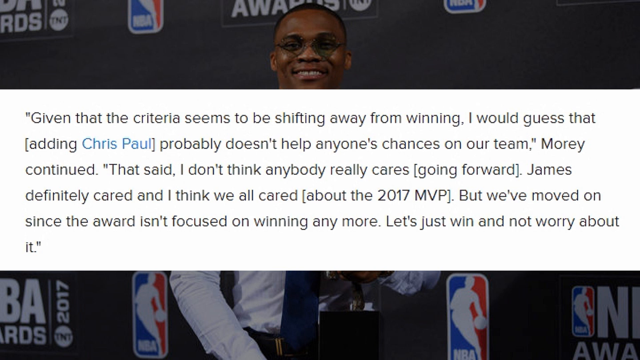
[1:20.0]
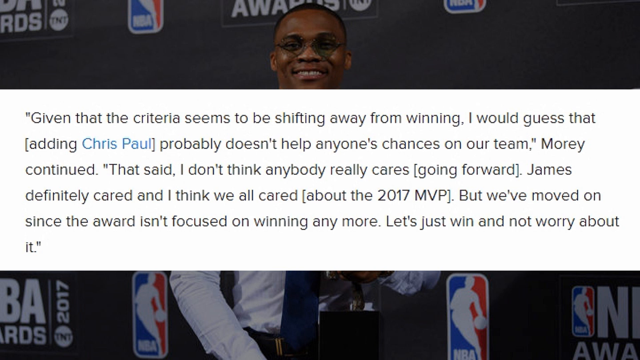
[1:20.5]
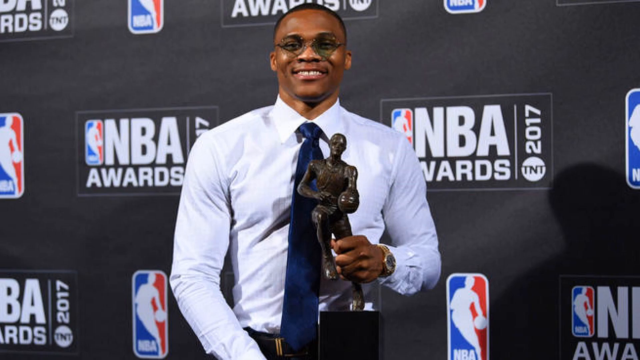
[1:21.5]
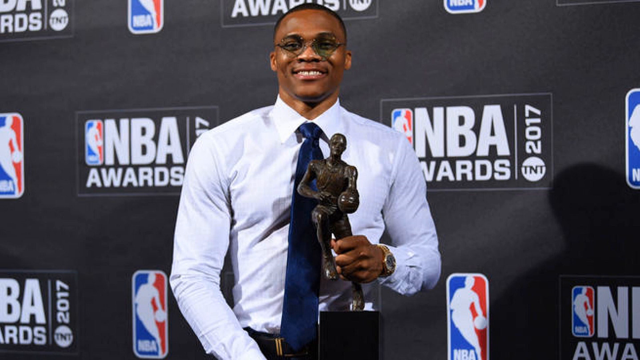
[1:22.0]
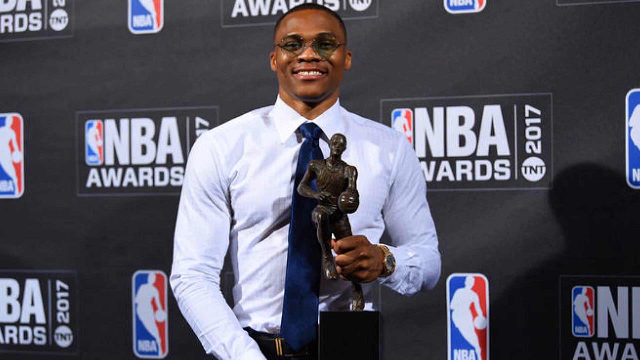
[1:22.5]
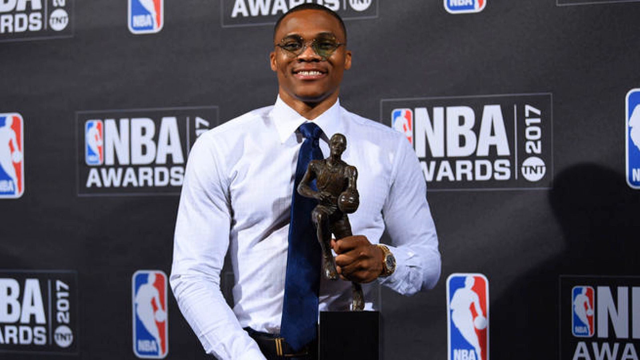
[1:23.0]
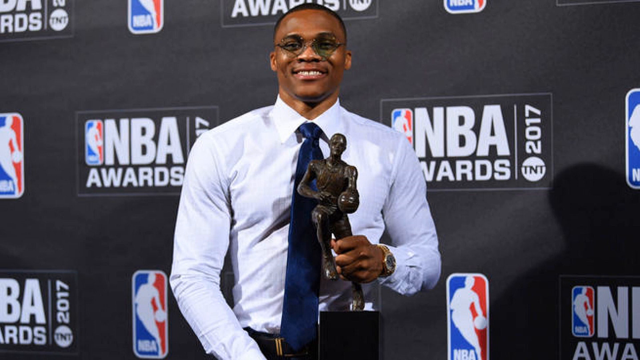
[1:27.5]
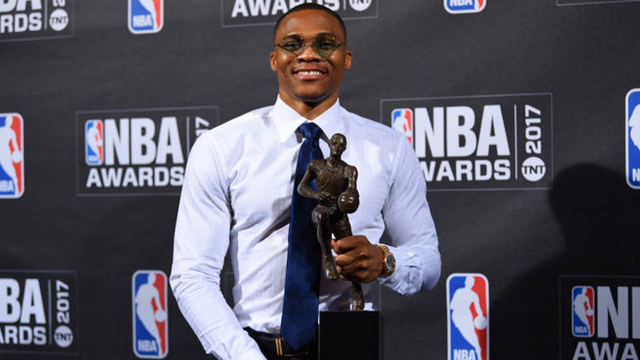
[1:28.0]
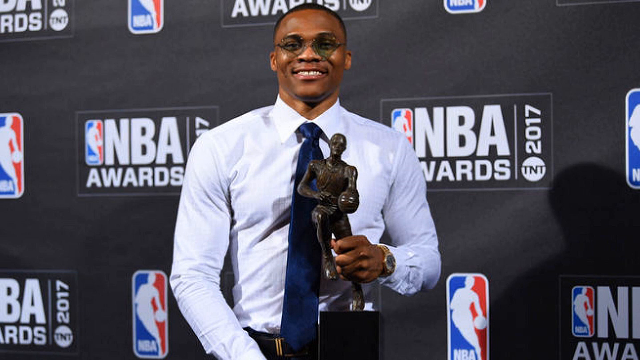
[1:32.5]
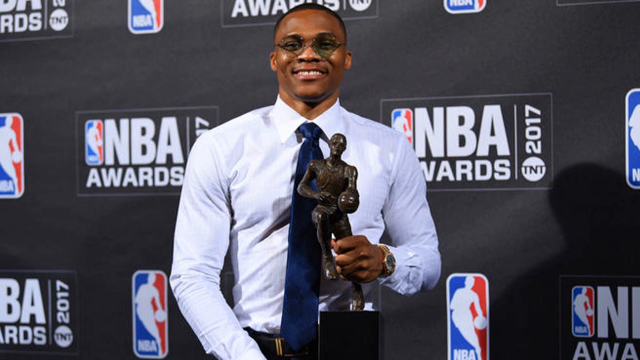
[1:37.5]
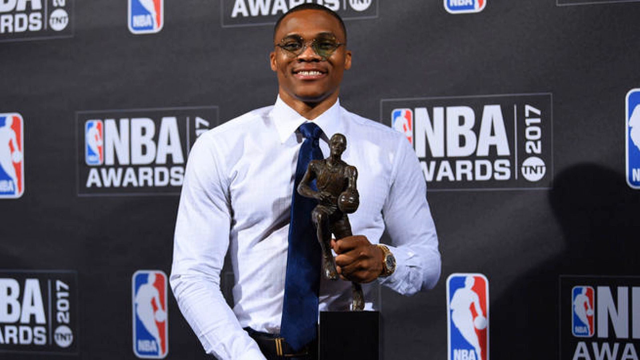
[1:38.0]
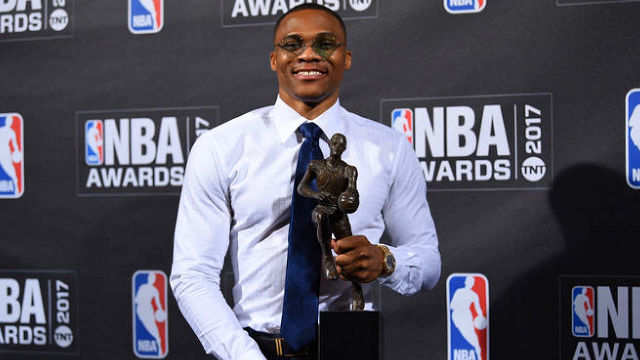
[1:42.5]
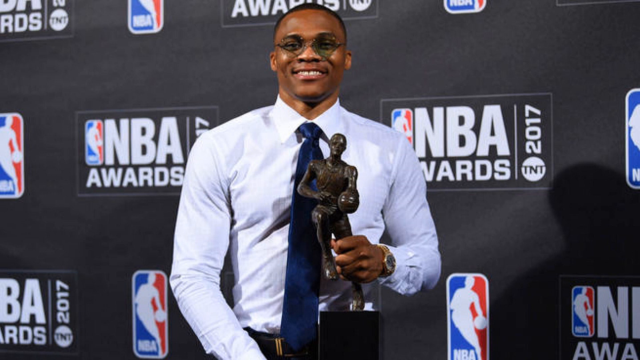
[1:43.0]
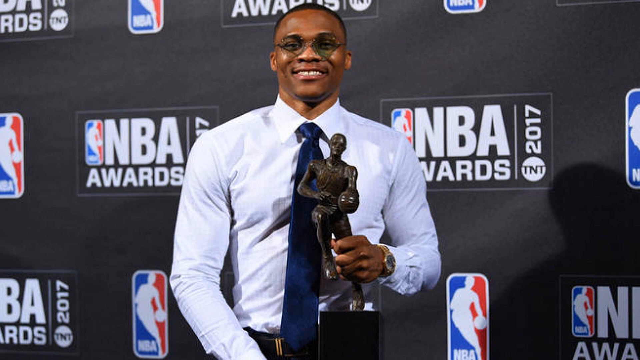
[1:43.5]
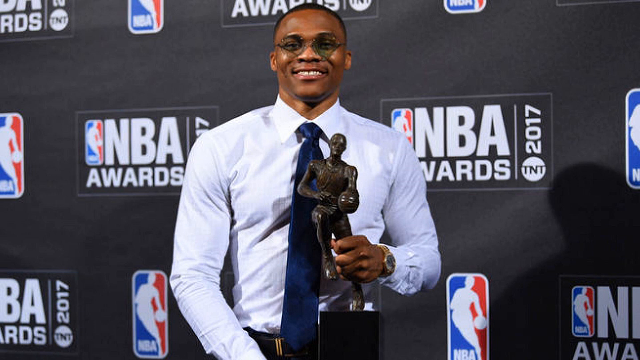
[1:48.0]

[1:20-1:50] Russell Westbrook looks very happy as he holds up a trophy and smiles directly at the camera, wearing a different pair of glasses. The background reads "NBA Awards 2017" with a TNT logo right below it, and is otherwise completely black except for the NBA Awards logo. Westbrook wears a light blue polo shirt and a dark blue tie. Text then reads "given that the criteria seems to be shifting away from winning," followed by further text including "James definitely cared and I think we all cared. But we've moved on since the award."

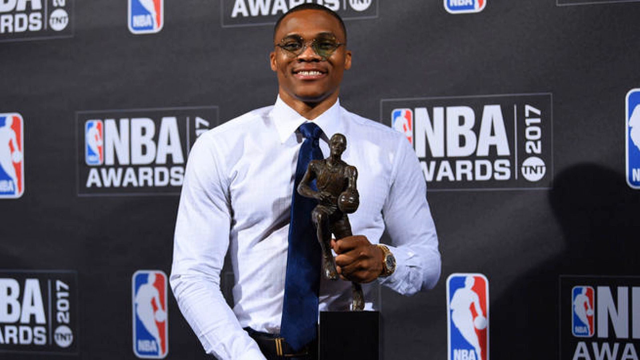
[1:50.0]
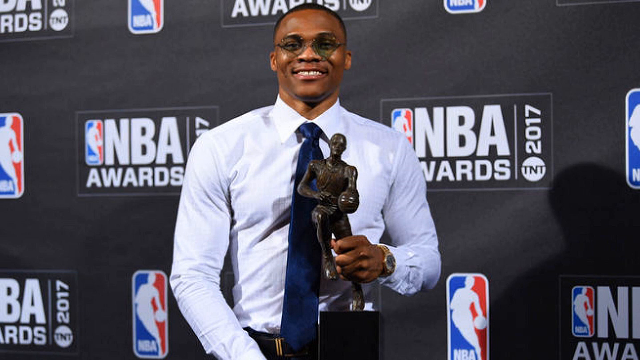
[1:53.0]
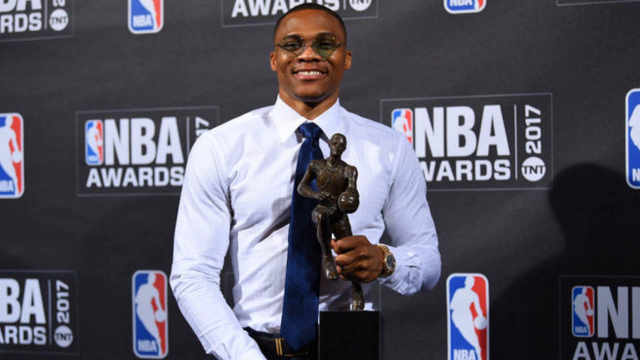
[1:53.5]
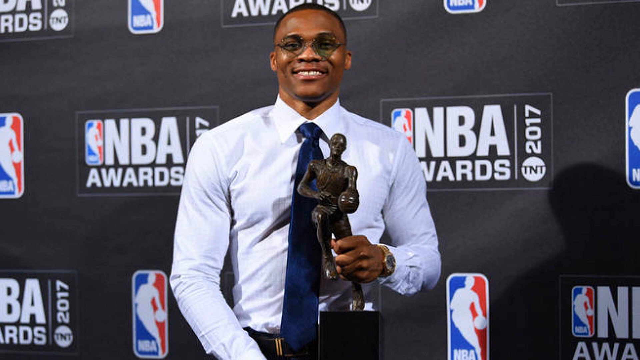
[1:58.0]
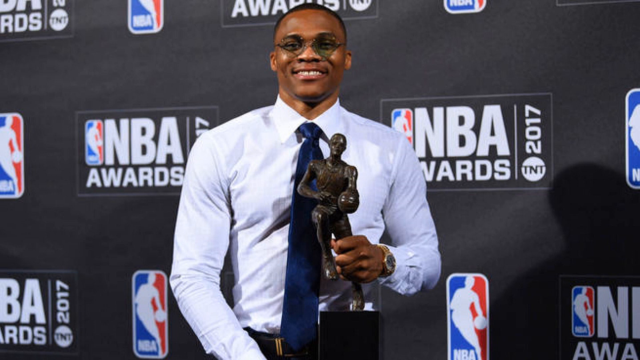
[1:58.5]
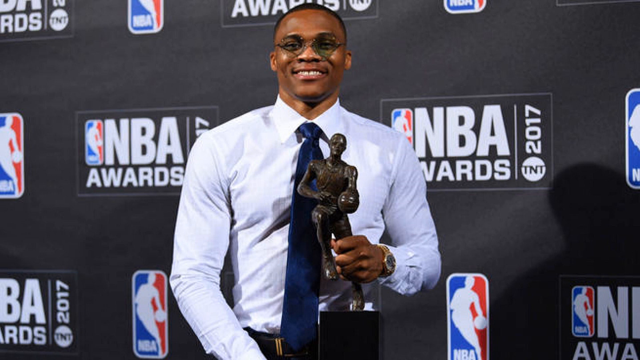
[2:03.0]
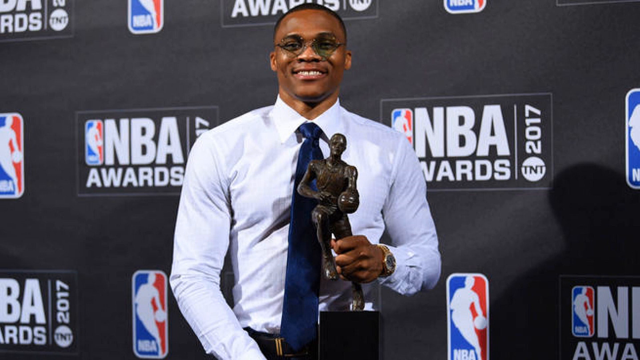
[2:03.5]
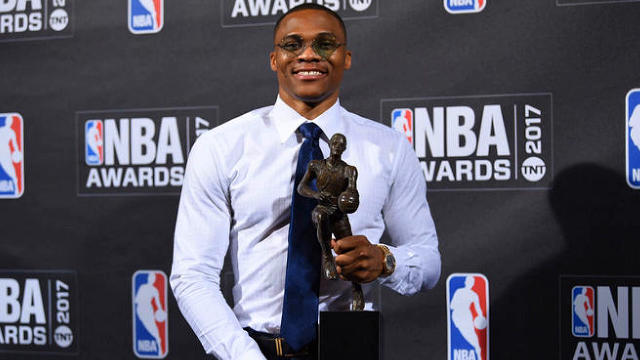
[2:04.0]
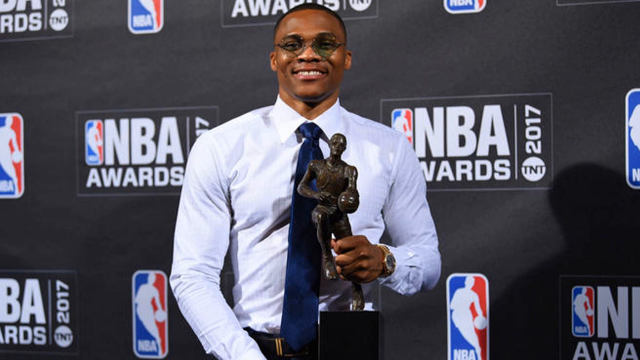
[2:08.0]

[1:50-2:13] Russell Westbrook holds up a trophy and smiles at the camera, wearing a dark blue tie with a light blue polo shirt. He stands in front of what appears to be an NBA Awards logo, along with the text "2017" and "TNT." His shadow is clearly visible in the bottom right section of the frame.